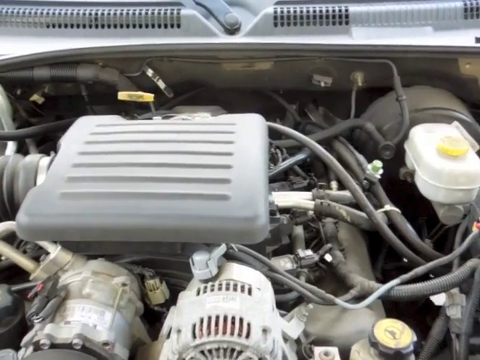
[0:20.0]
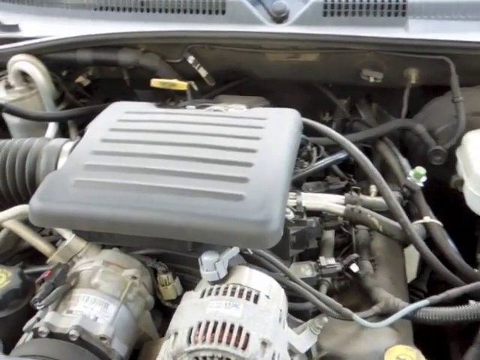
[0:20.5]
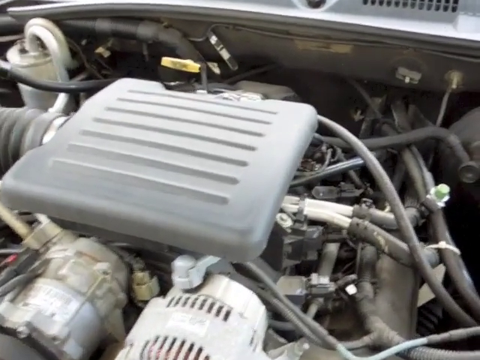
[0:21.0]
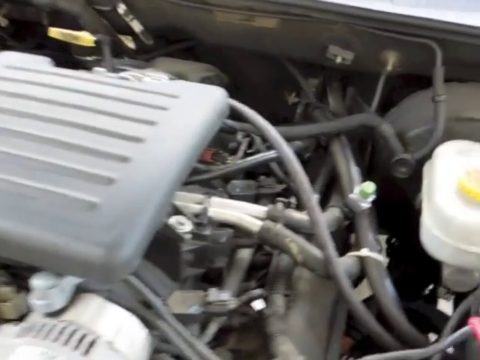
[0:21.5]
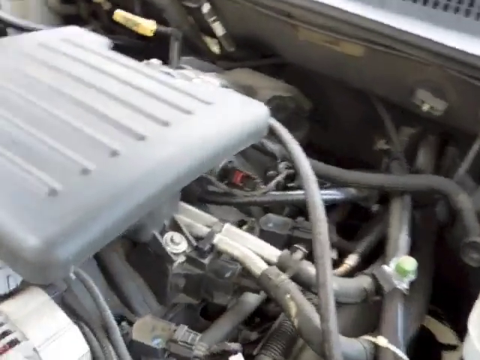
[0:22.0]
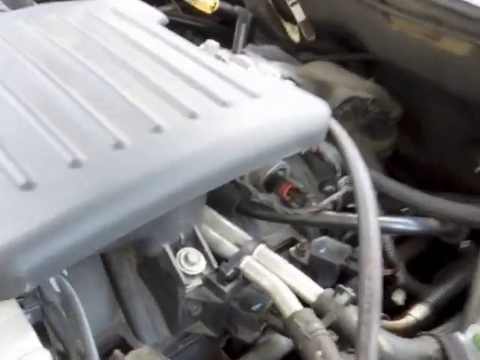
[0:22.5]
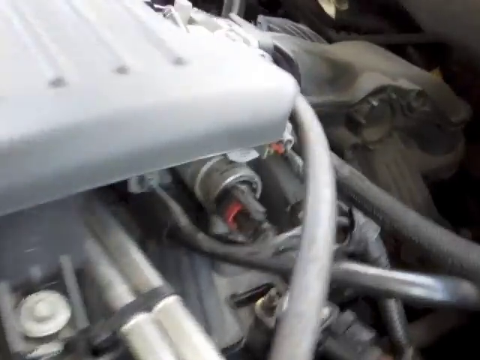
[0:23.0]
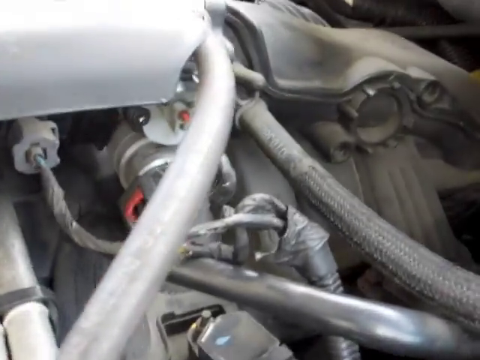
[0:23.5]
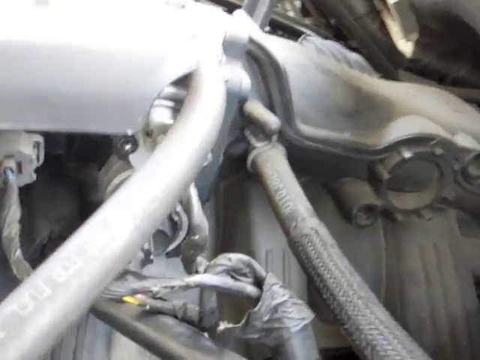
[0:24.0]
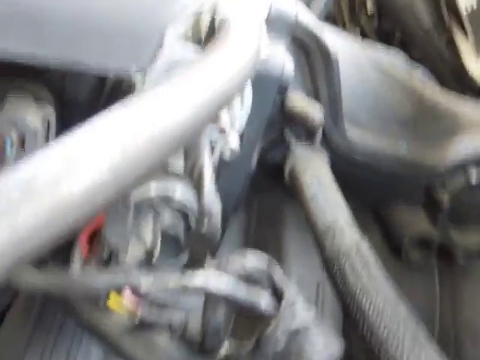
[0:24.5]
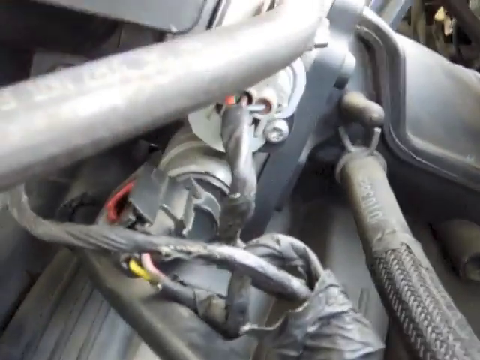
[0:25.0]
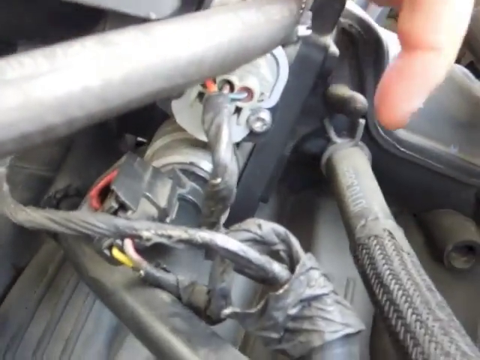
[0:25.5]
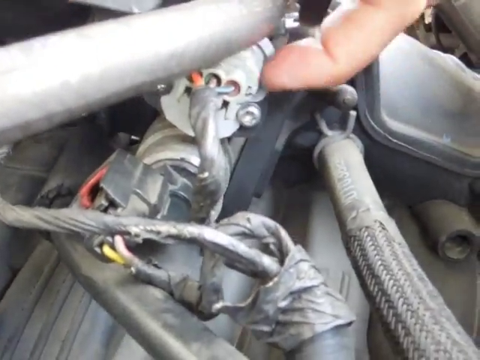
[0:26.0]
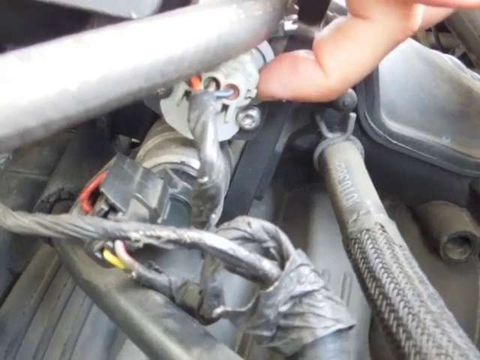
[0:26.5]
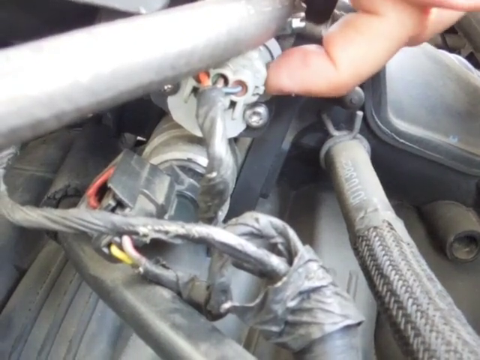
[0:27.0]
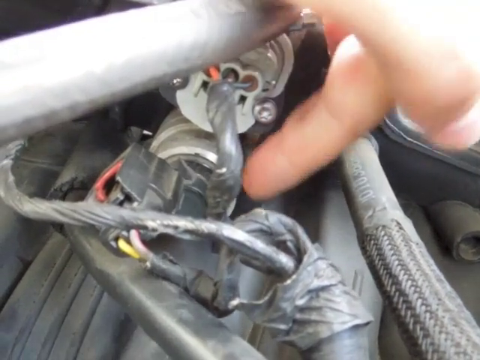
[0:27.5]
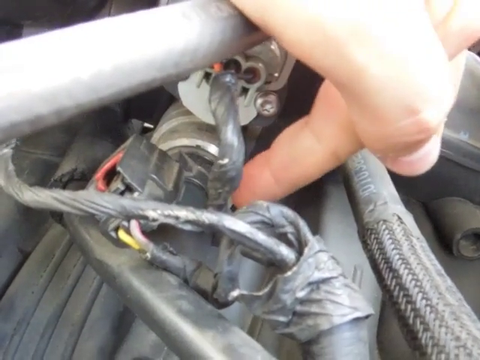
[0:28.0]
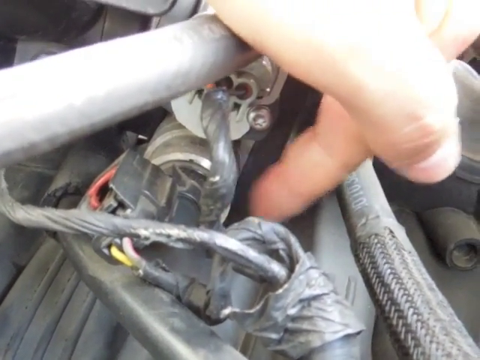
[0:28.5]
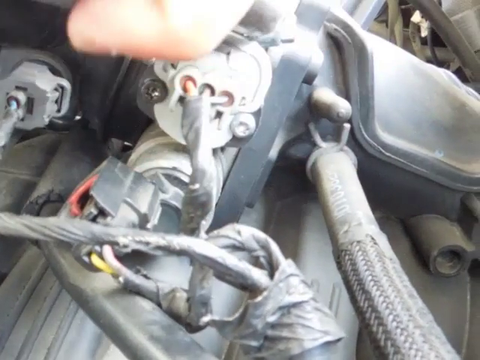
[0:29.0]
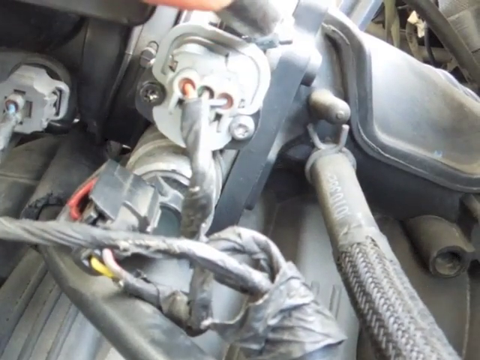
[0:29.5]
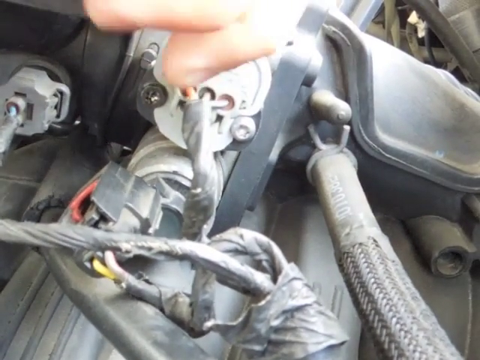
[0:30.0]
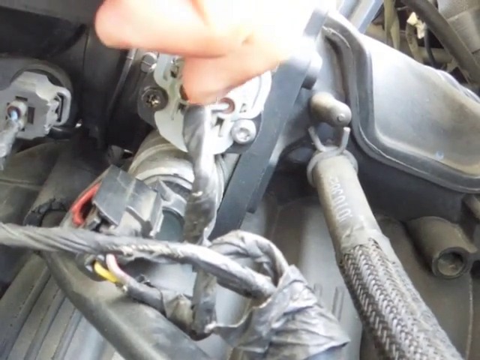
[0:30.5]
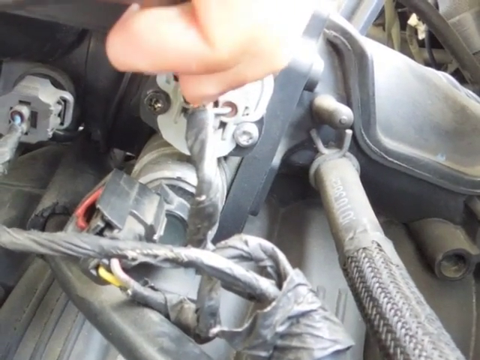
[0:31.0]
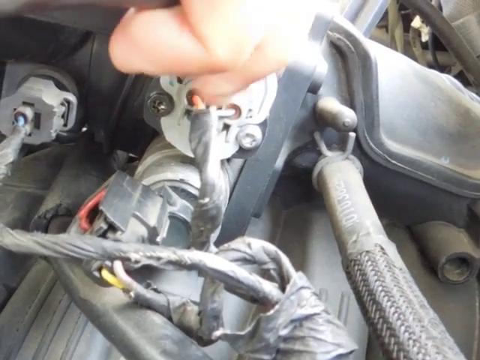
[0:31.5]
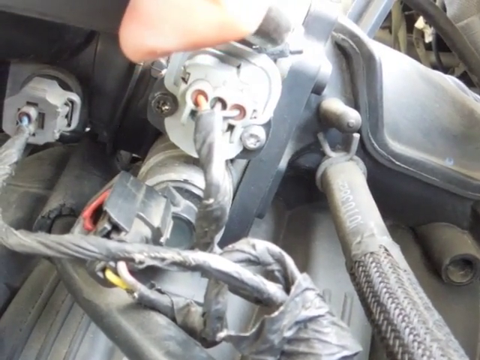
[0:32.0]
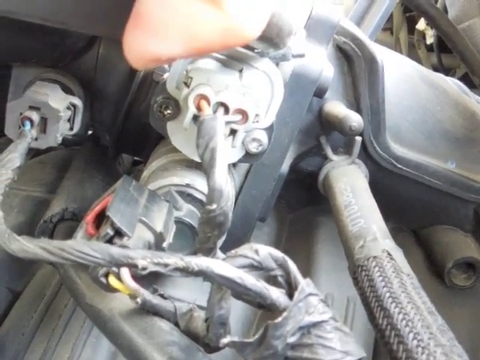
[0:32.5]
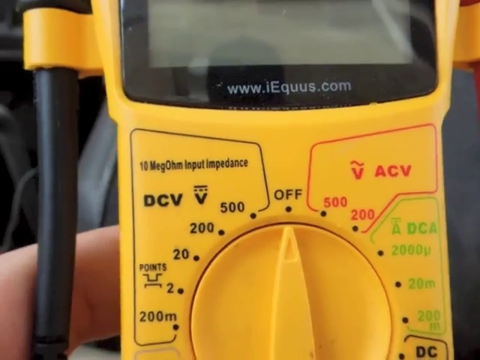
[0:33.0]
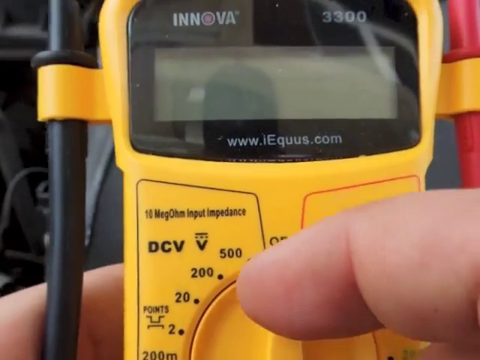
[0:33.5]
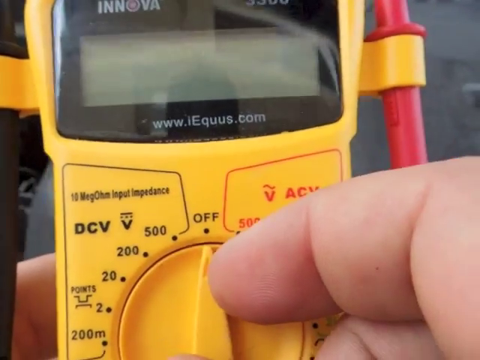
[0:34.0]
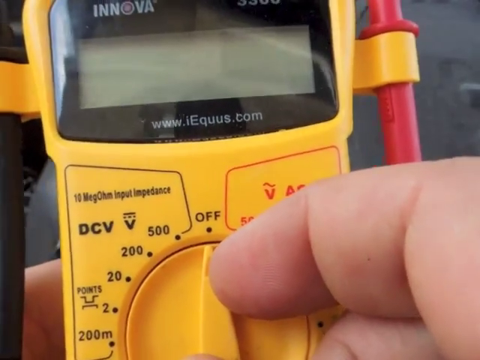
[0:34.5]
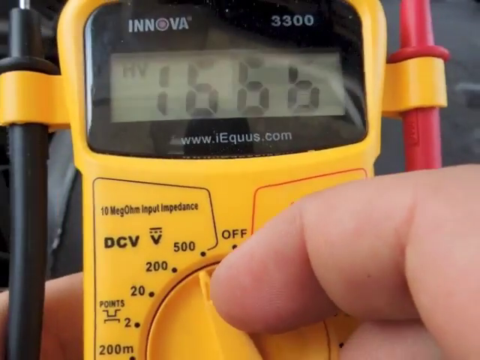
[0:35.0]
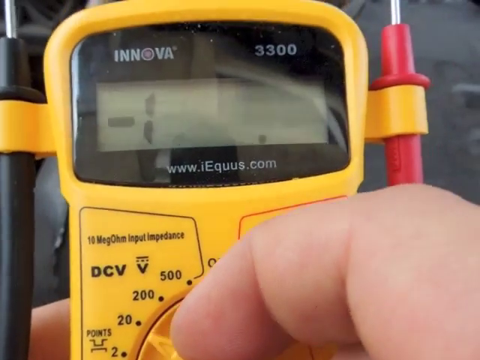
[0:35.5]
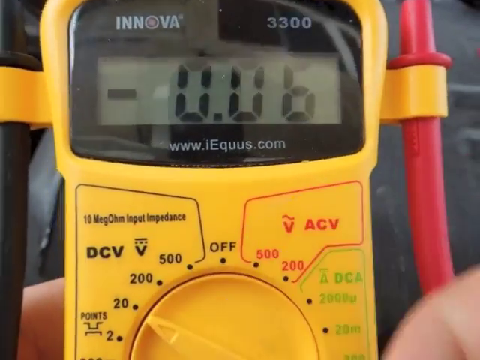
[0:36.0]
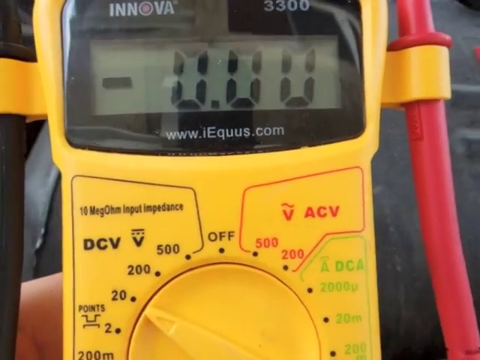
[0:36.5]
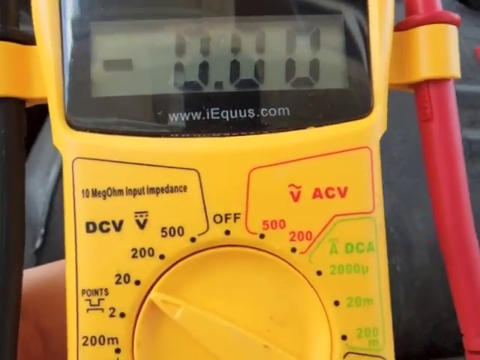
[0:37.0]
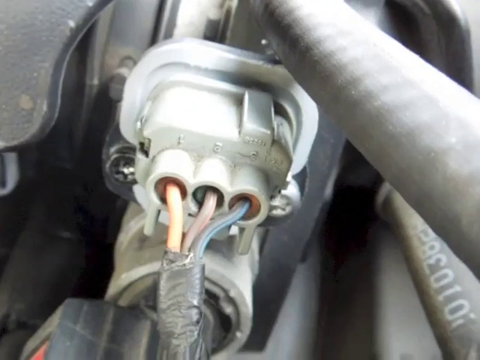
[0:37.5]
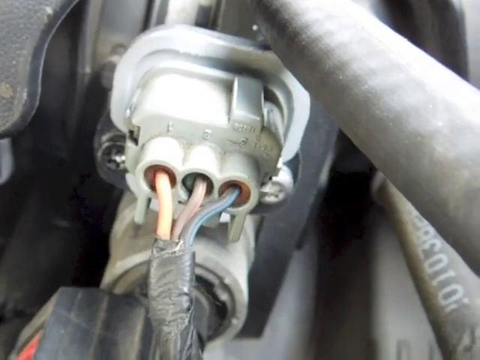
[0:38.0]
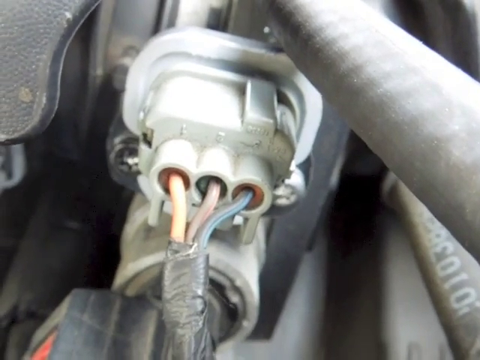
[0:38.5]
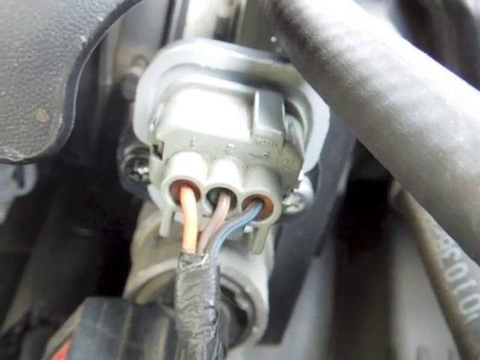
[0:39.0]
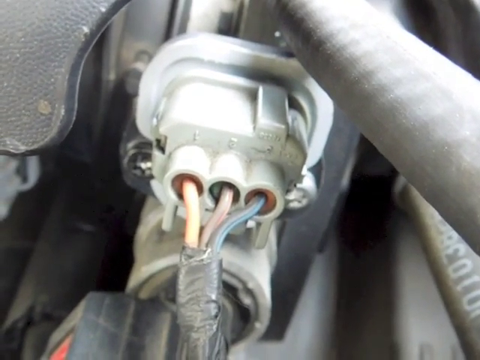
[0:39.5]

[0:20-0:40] The camera looks into the engine compartment from the front of the vehicle toward the windshield. It moves to the right of the air cleaner cover and zooms down in on electronics, a connector. A pointing finger, likely the mechanic's, points down at the connector, which has three wires coming out of it and a hex head screw on each side holding it in place. A covered, wrapped cable containing multiple wires runs toward the camera, and there are additional hoses, including a mesh flex hose underneath the finger. The mechanic points to the electrical connector, likely associated with a sensor, and to a sensor and connector below. The area is just to the rear of the air cleaner, toward the windshield and the cab. A test multimeter is shown with the brand name "INNOVA 3300" and, below the screen, "www.iEquus.com". The mechanic sets the multimeter to 20 under the DCV setting. The camera again zooms in on the connector just behind the air cleaner cover.